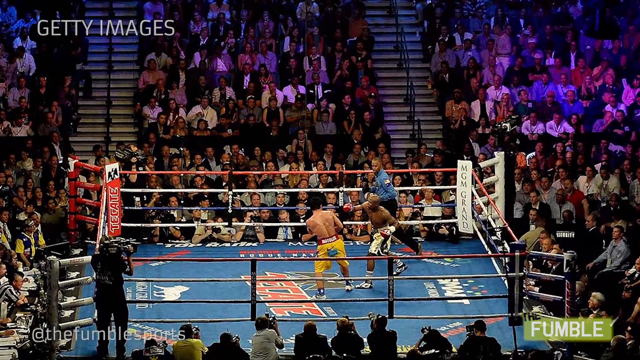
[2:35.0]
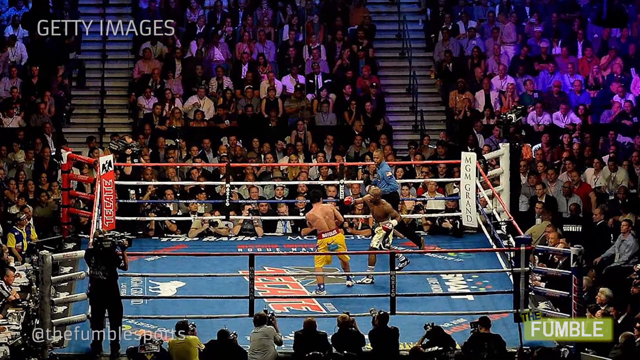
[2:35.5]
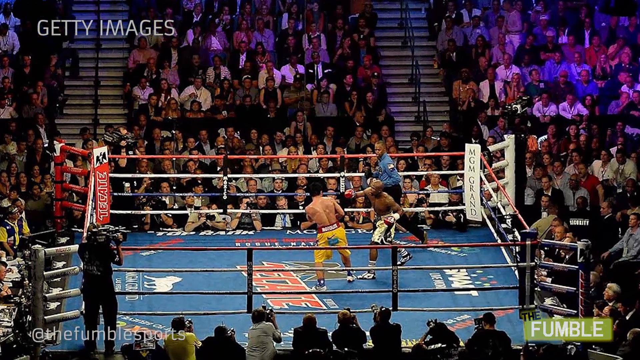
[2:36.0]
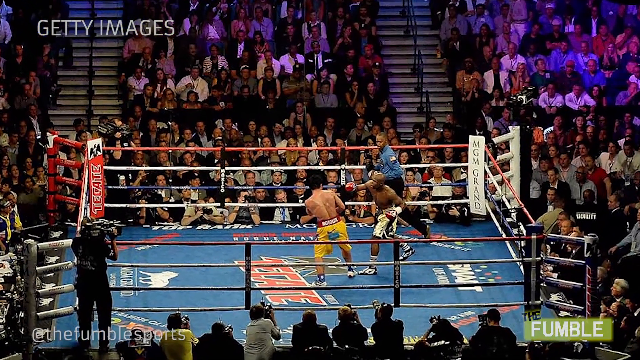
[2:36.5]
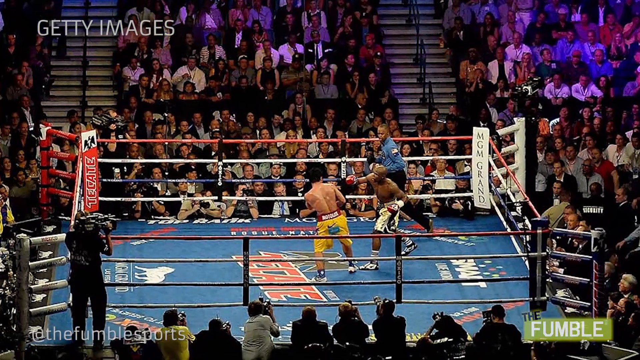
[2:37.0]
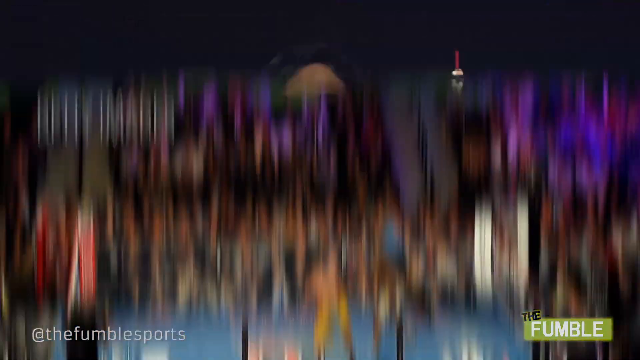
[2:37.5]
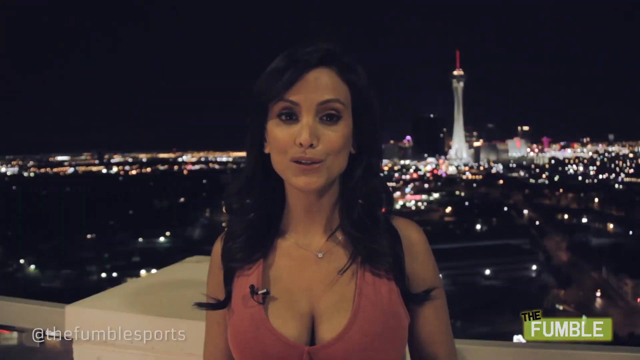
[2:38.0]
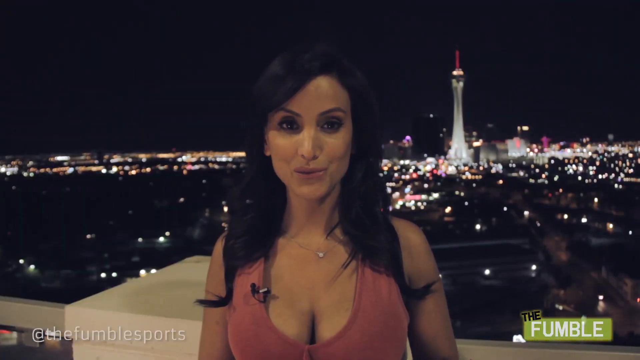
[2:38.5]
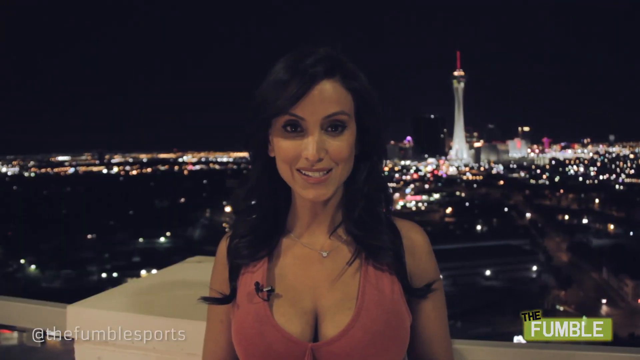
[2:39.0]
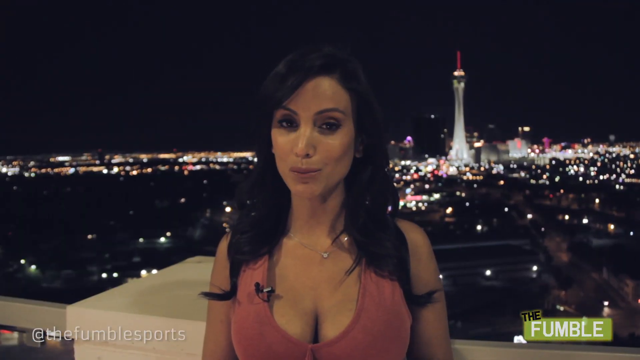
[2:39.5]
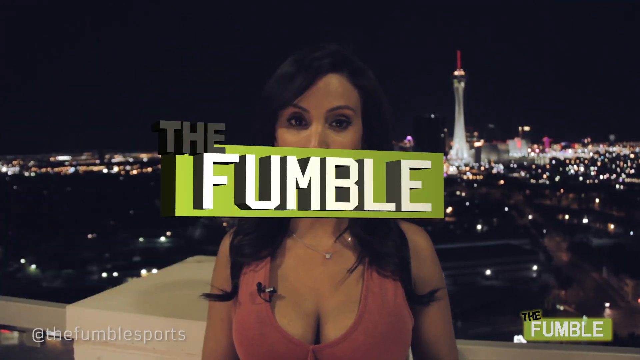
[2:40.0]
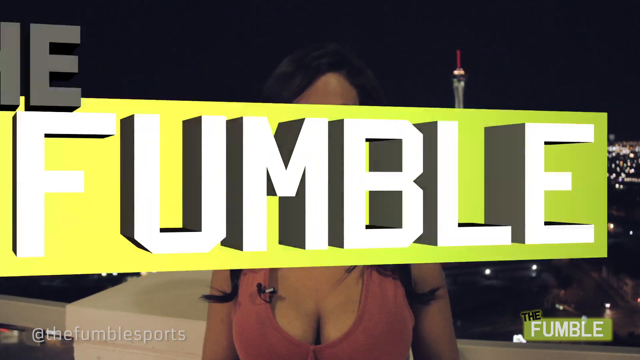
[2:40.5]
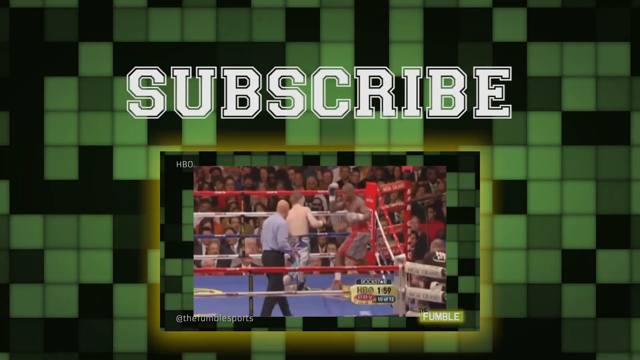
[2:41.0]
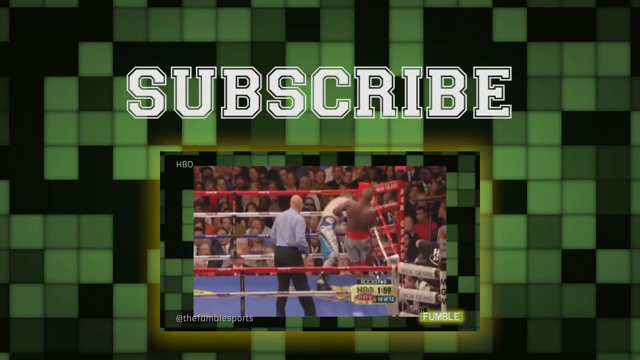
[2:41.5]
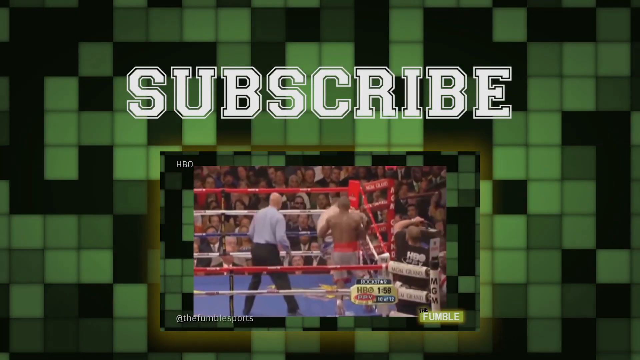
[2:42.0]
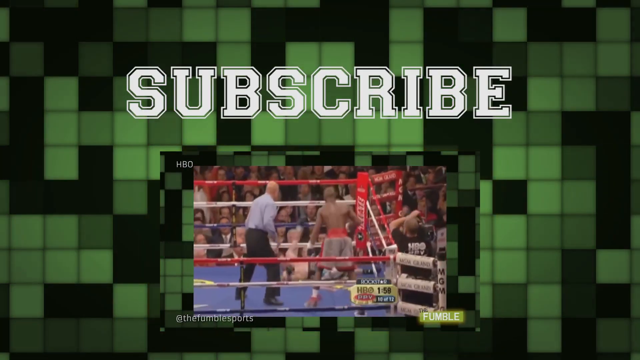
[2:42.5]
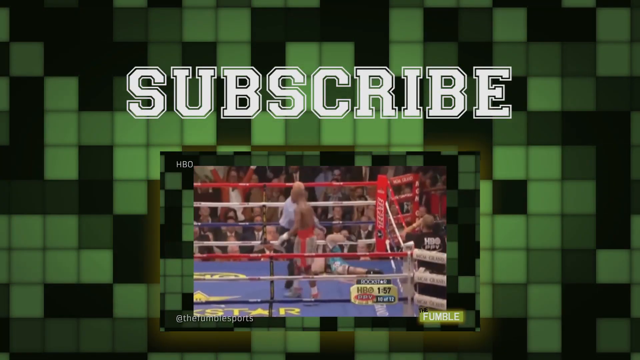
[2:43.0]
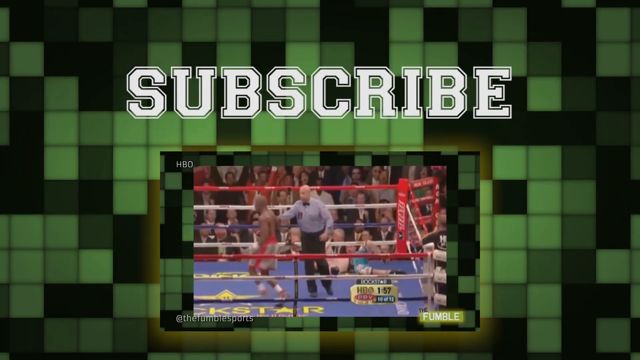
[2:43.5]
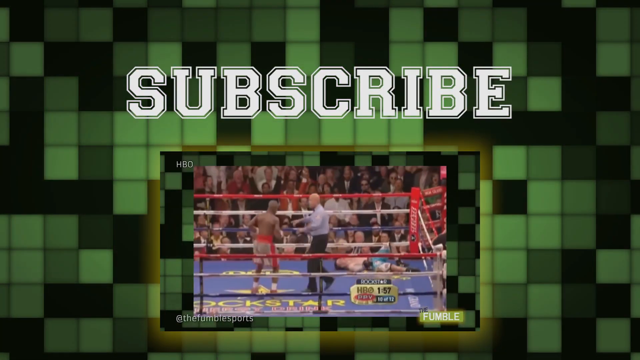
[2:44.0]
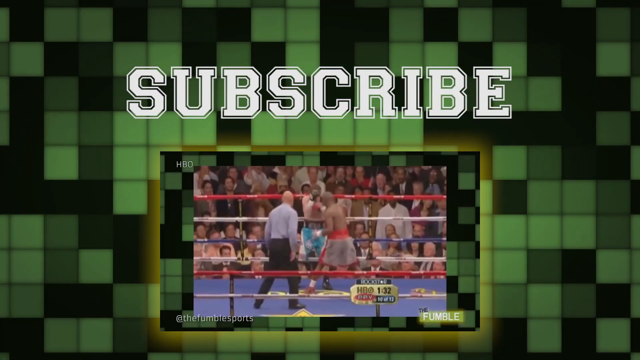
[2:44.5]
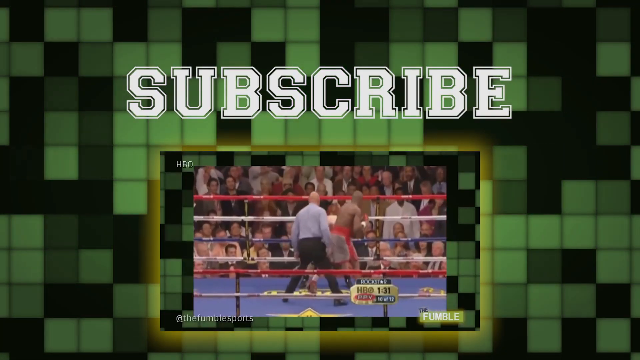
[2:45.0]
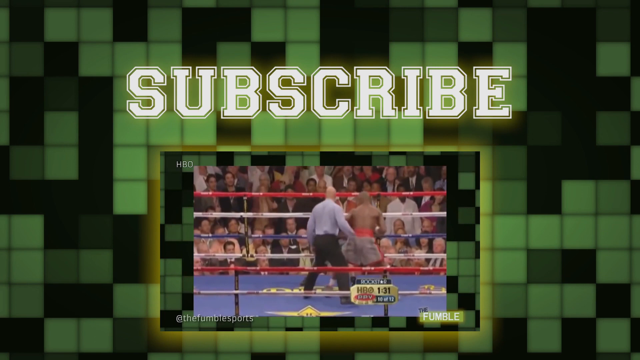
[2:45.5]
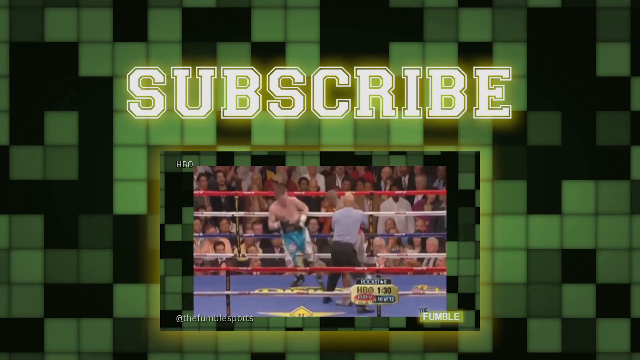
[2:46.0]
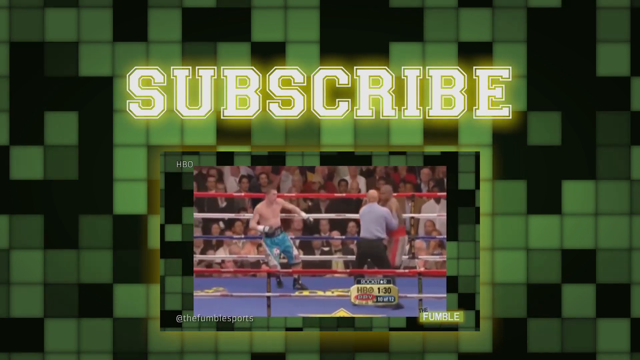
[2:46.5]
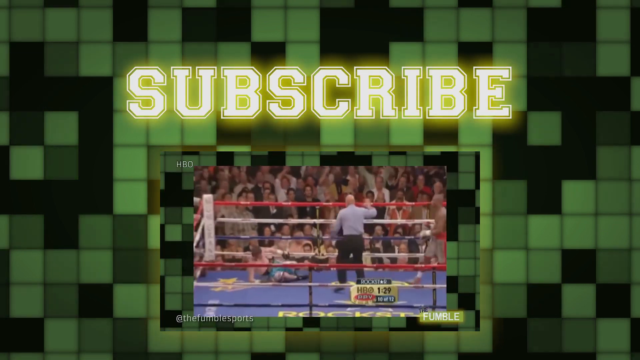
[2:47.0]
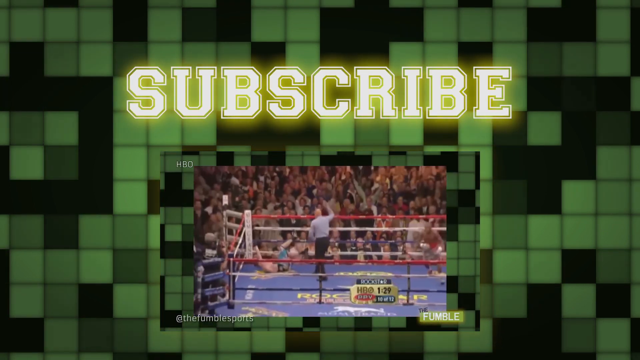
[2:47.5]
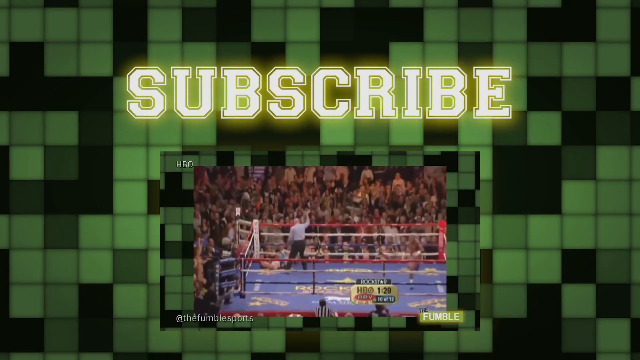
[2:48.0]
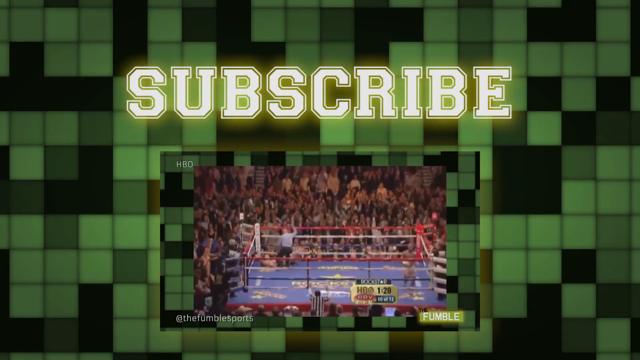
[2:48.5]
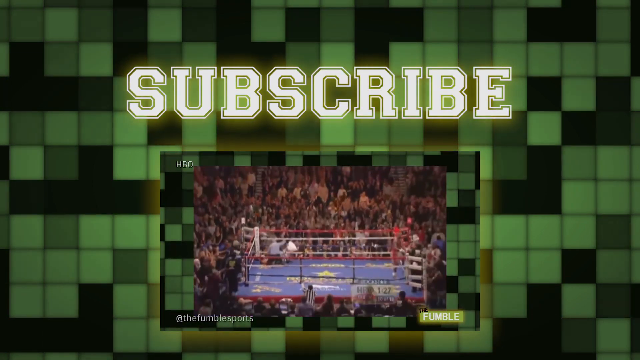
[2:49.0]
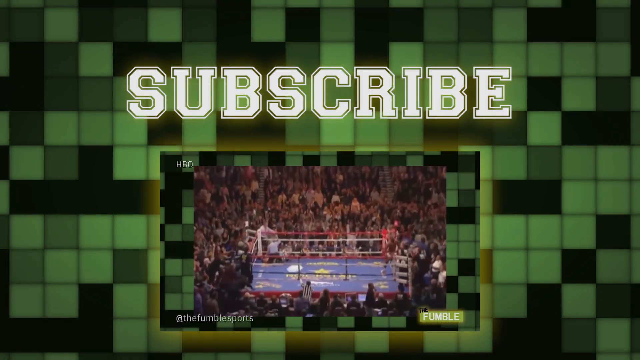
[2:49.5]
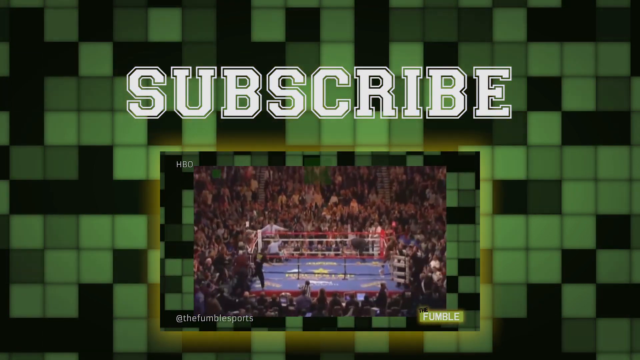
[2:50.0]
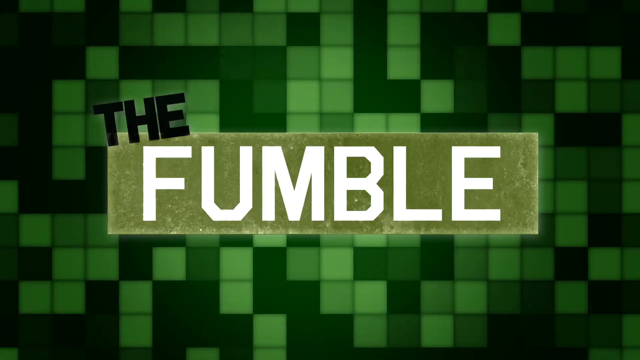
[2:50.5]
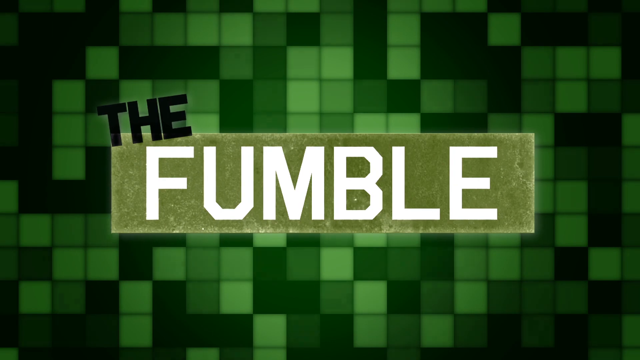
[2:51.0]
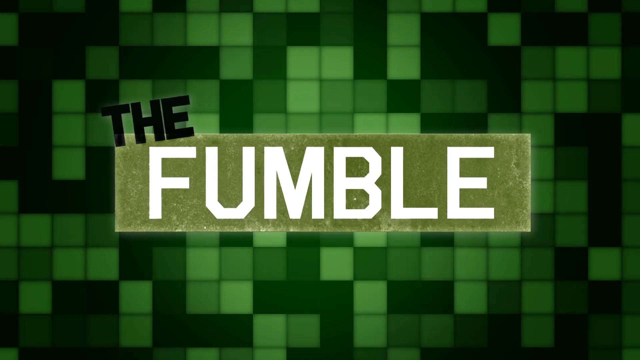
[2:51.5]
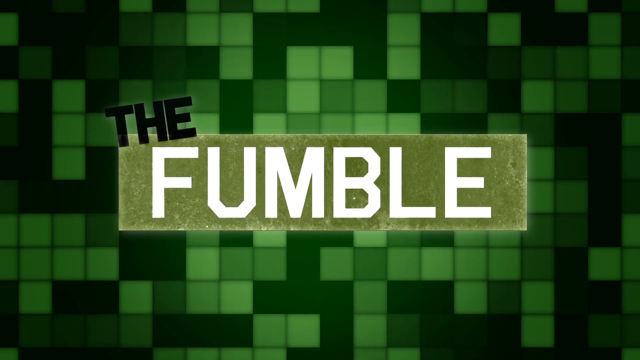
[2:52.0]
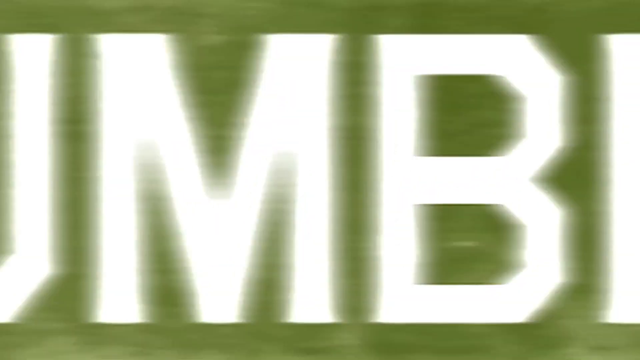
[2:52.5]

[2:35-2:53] A still photograph shows a boxing match with the full ring visible, as well as a large crowd of people. The two famous boxers Pacquiao and Mayweather are mid-fight, with Mayweather lunging forward to throw a punch toward Pacquiao, and the ref behind them monitoring the match. The scene changes to a female presenter with a night cityscape behind her, and an animated overlay appears with the words "The Fumble". The video then moves to an outro with a small video thumbnail showing a replay of a different boxing match, with the word "subscribe" written above the footage. The video ends with the words "The Fumble" appearing across it again and a YouTube subscribe logo in the bottom right corner.